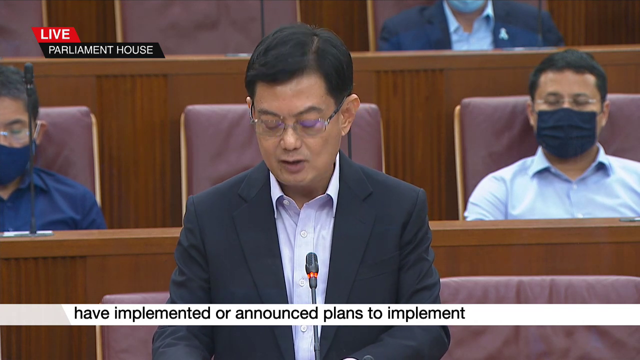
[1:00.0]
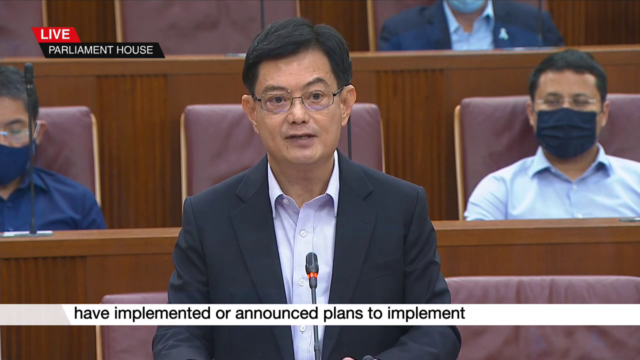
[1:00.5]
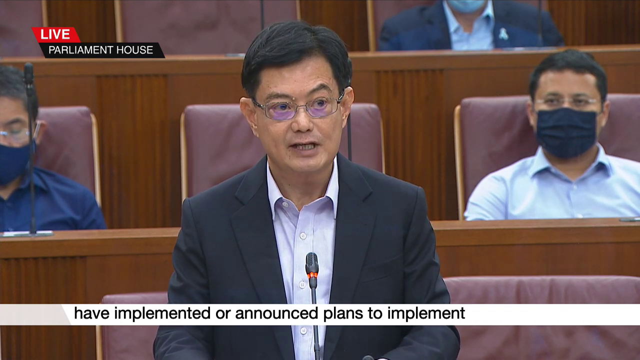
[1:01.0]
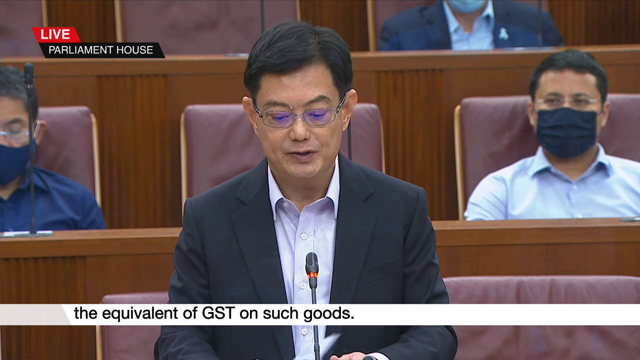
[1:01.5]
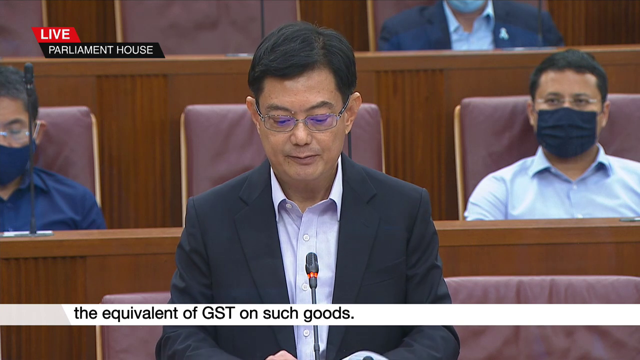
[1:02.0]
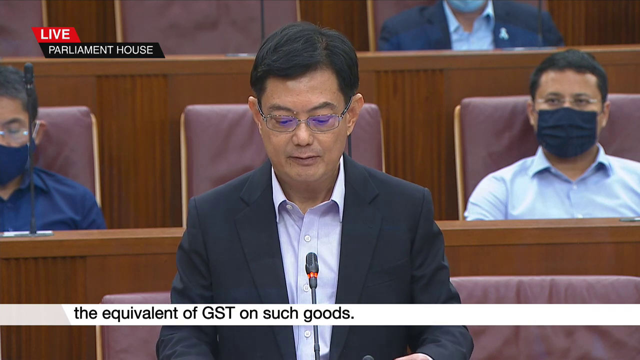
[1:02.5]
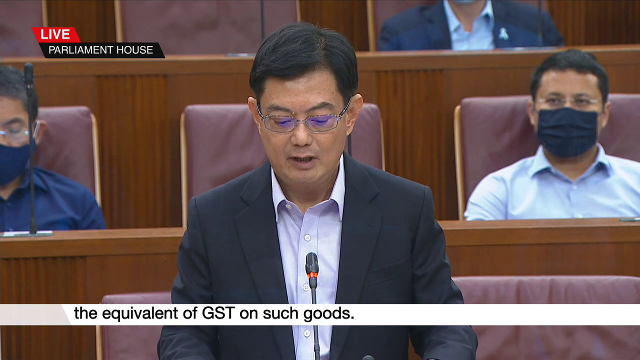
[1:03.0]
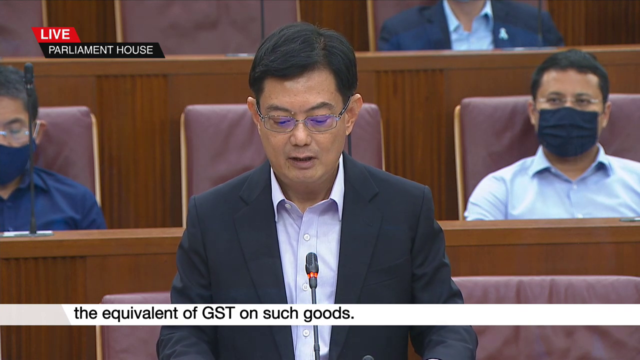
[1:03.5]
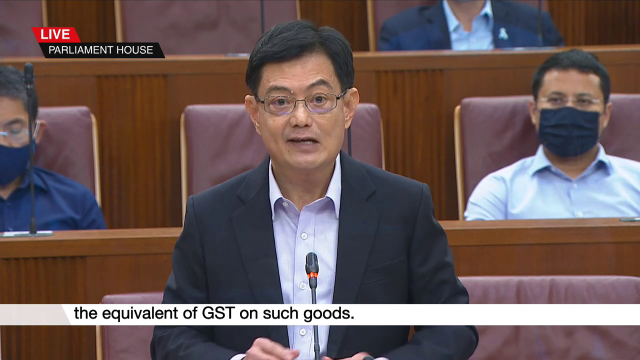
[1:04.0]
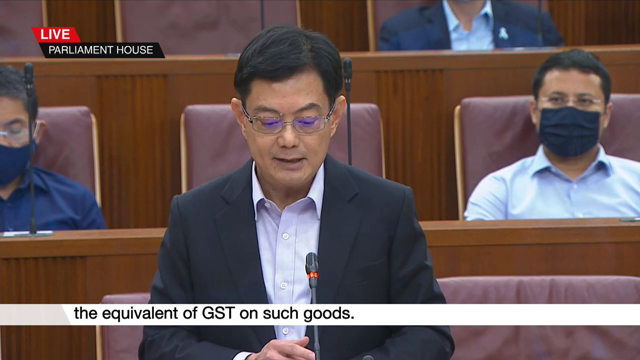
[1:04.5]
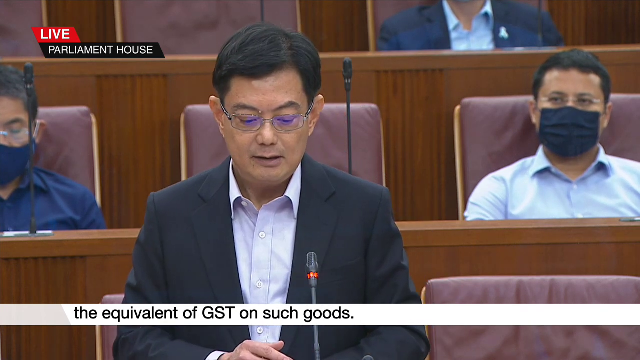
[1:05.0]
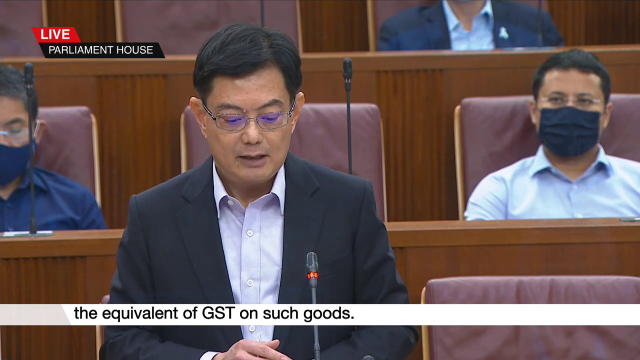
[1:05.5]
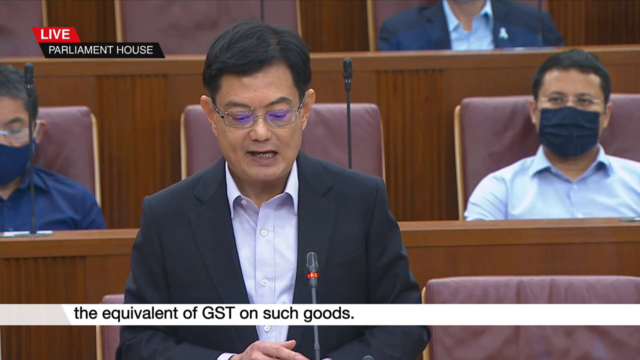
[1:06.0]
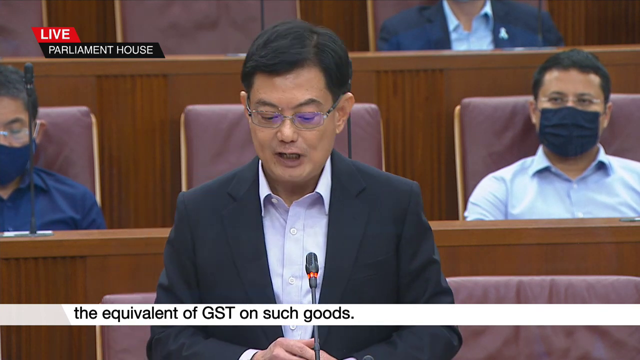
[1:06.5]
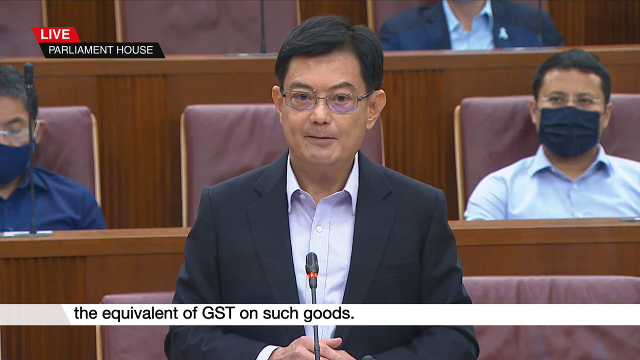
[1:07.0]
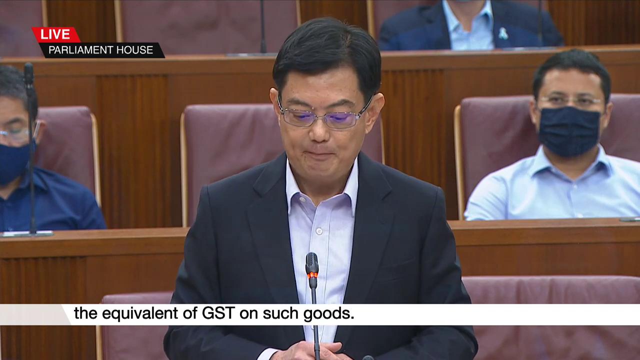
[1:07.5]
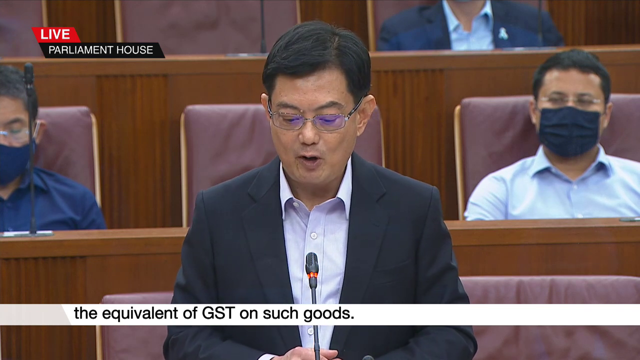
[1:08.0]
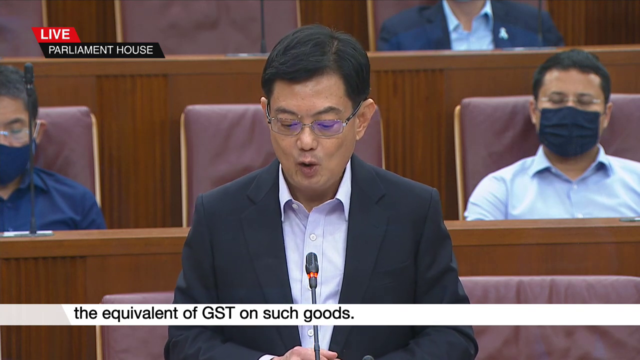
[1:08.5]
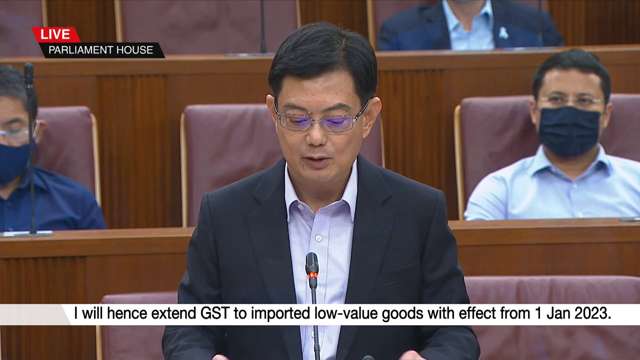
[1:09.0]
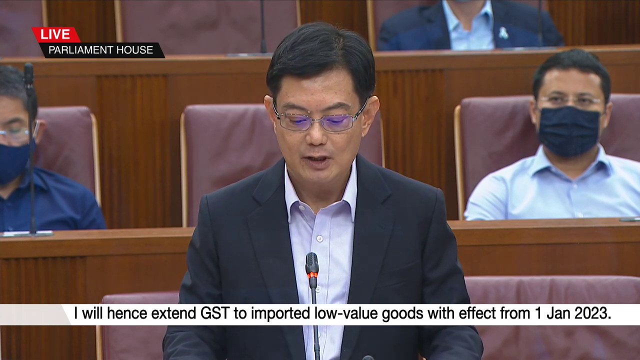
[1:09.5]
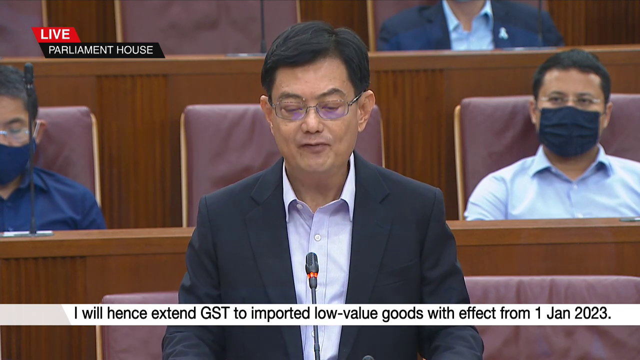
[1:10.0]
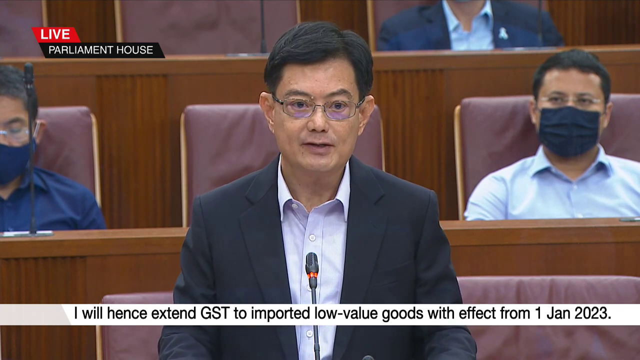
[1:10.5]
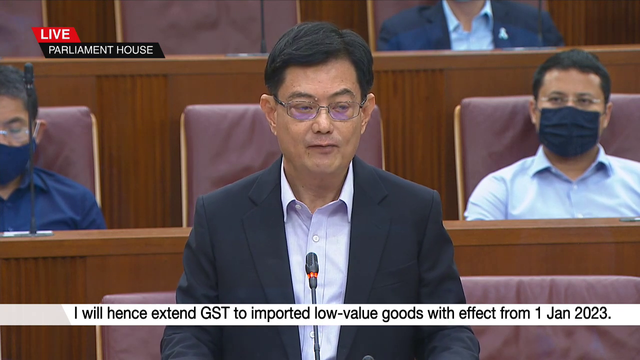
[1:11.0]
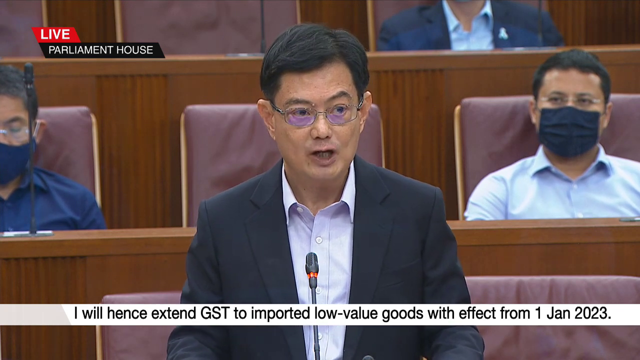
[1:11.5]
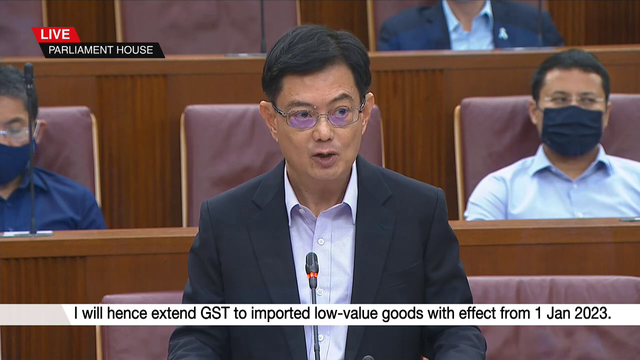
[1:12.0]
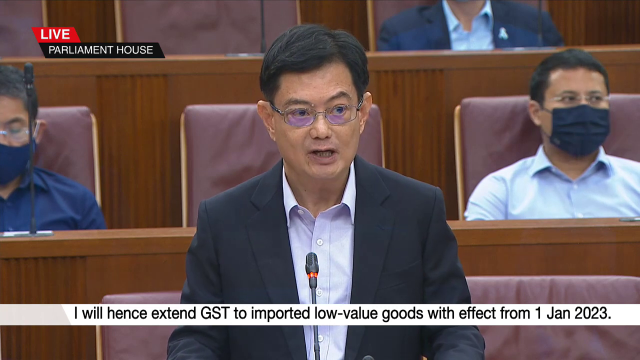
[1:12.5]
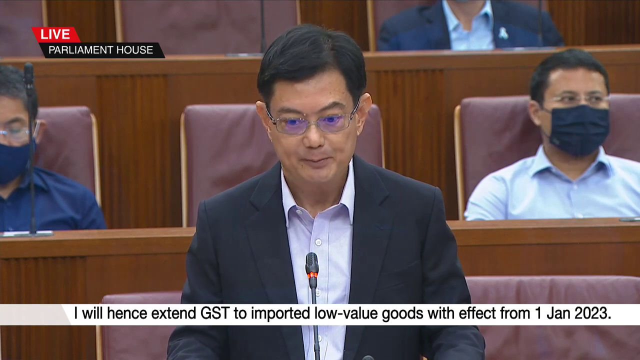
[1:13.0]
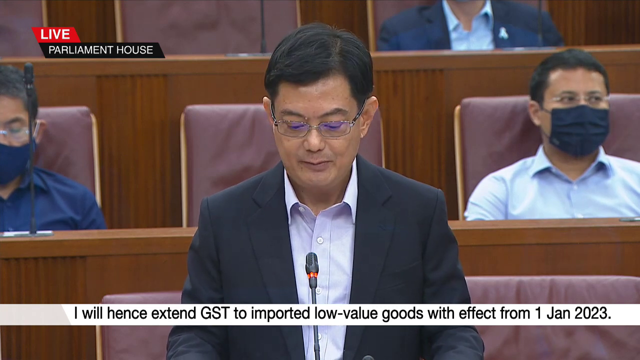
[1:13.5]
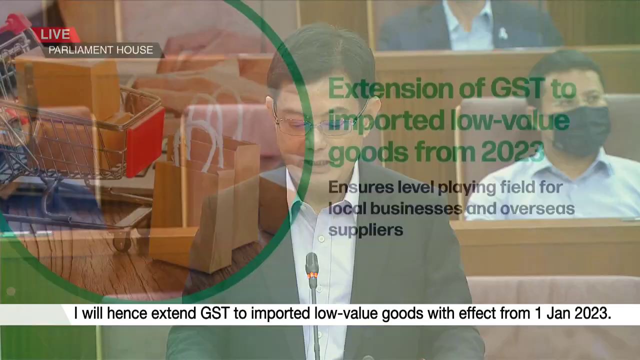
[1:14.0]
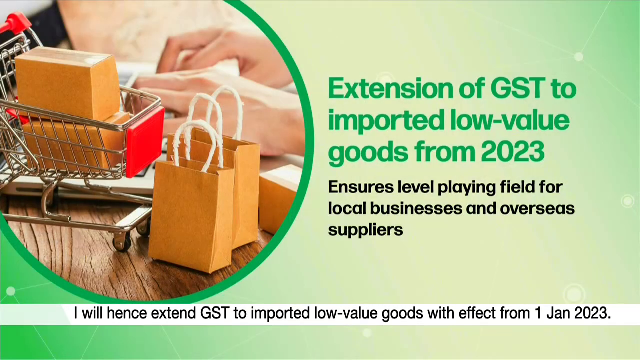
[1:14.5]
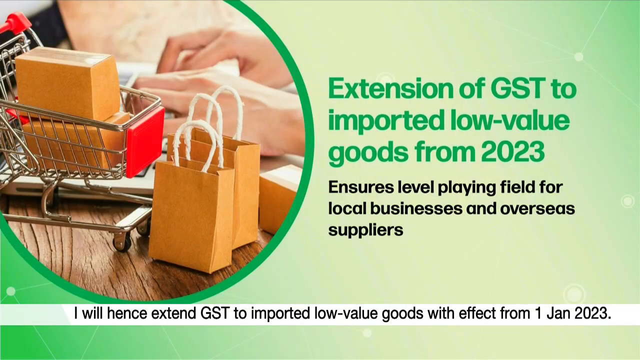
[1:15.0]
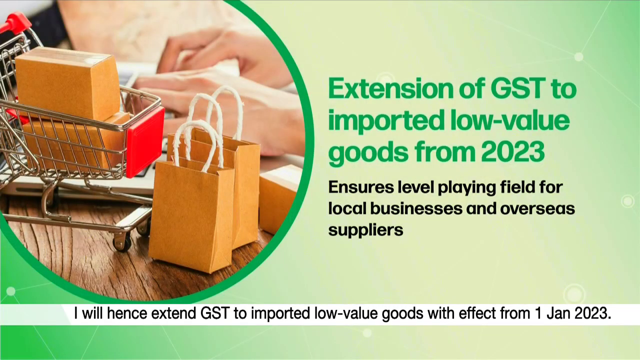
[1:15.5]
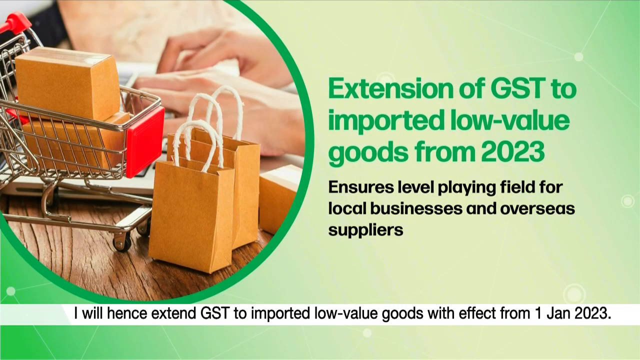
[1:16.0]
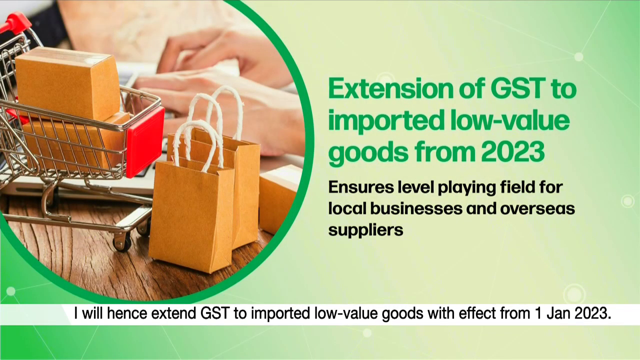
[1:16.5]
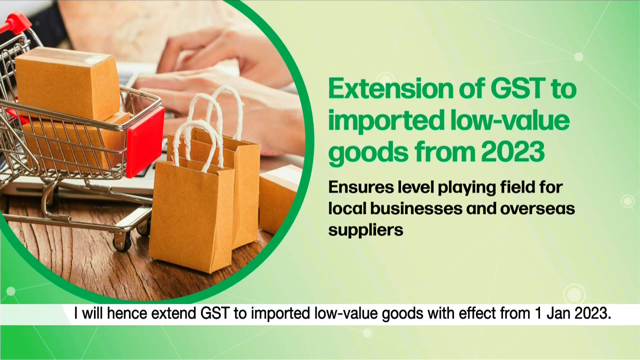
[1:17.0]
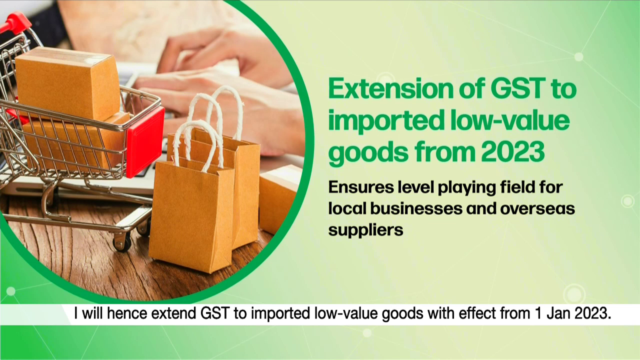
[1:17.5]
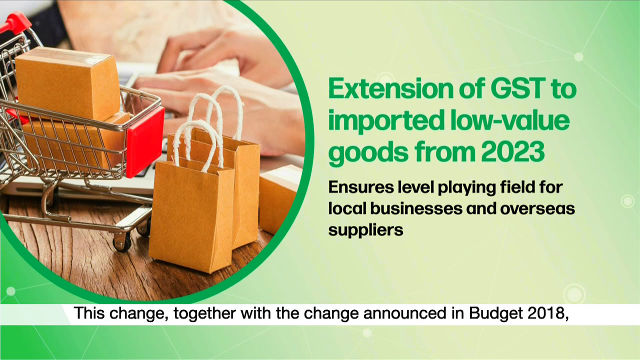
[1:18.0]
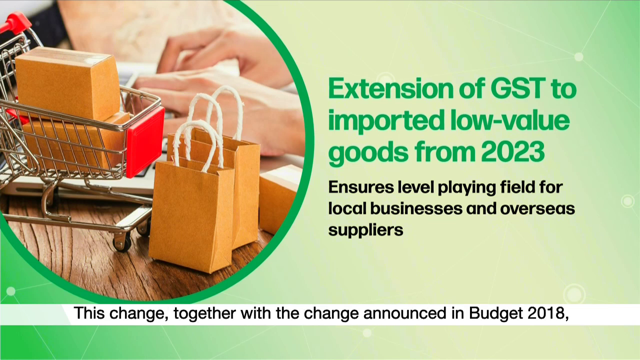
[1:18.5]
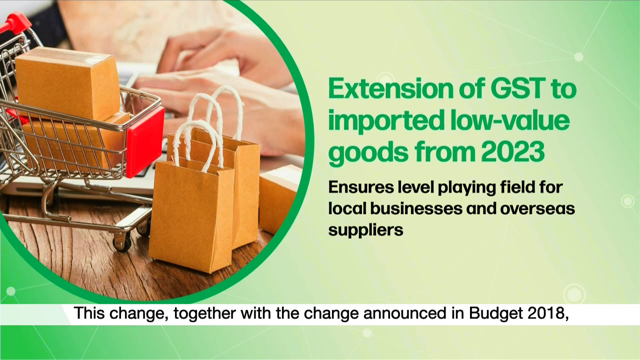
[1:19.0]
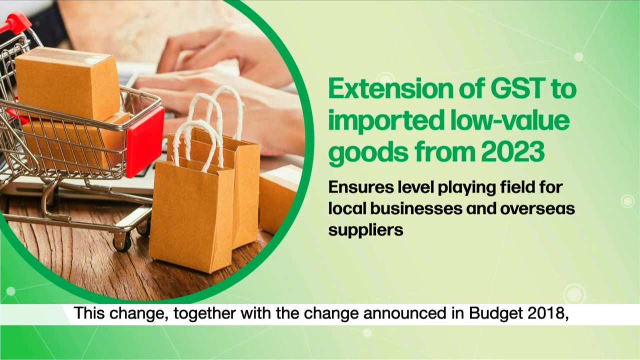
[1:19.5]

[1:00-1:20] The man continues to speak about GST, saying "I will hence extend GST to imported low-value goods." Then a graphic appears. On its left-hand side, inside a circle with a green circle around it, is an image of a shopping cart with boxes in it, some shopping bags, and a person typing on a laptop, apparently meant to represent e-commerce. The shopping cart looks maybe 8 by 8 by 5 inches, not a full-size cart. To the right of the image is green text, in what looks like Helvetica, reading "extension of GST to imported low-value goods from 2023," with smaller black text underneath roughly reading "This ensures level playing field for local businesses and overseas suppliers." At the very end he says, "this change together with the change announced in budget 2018,".